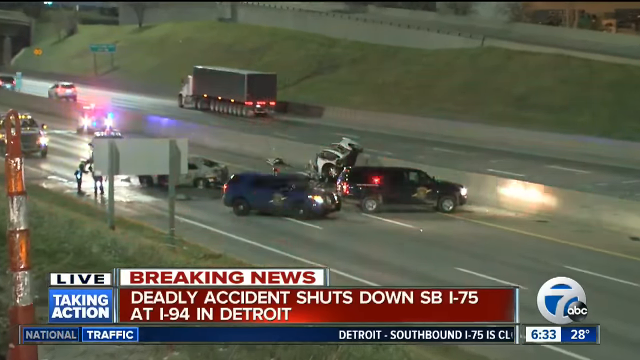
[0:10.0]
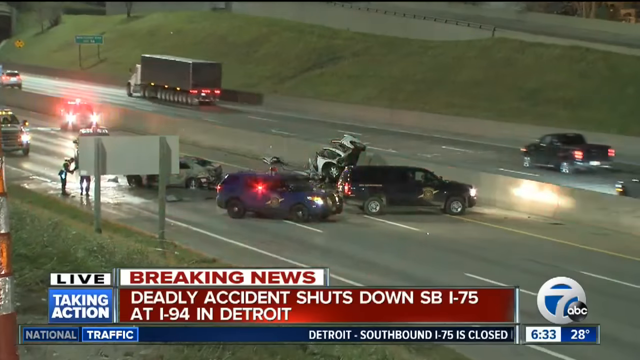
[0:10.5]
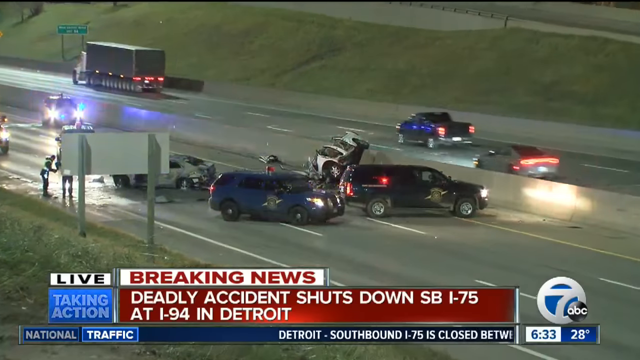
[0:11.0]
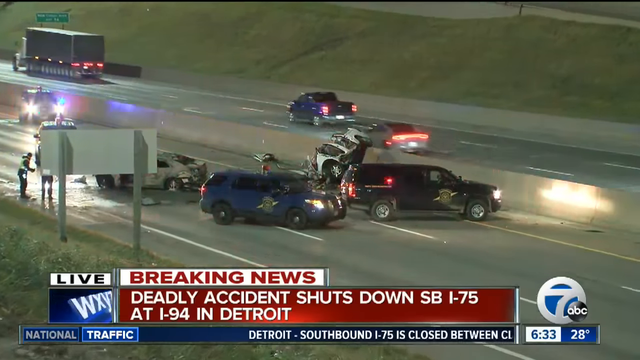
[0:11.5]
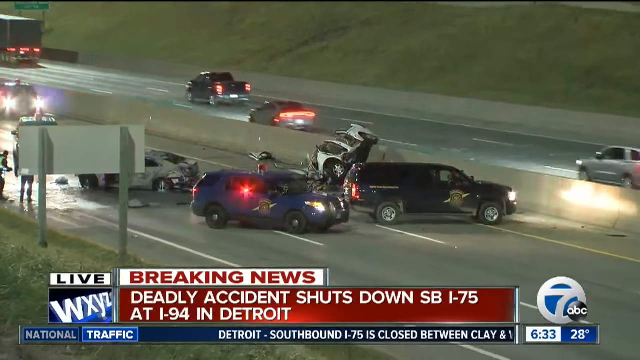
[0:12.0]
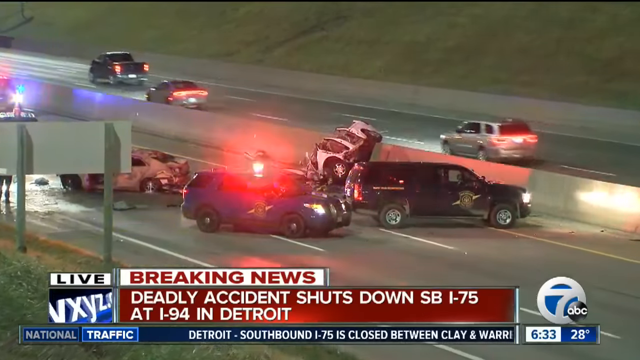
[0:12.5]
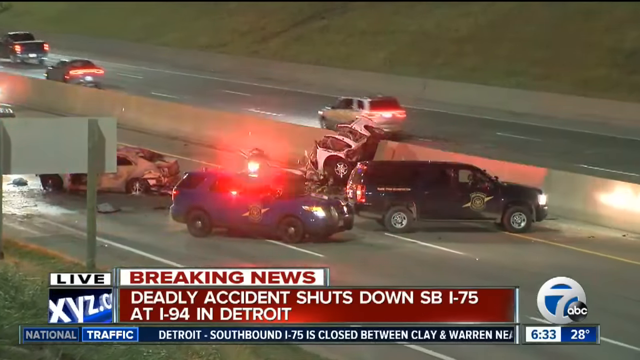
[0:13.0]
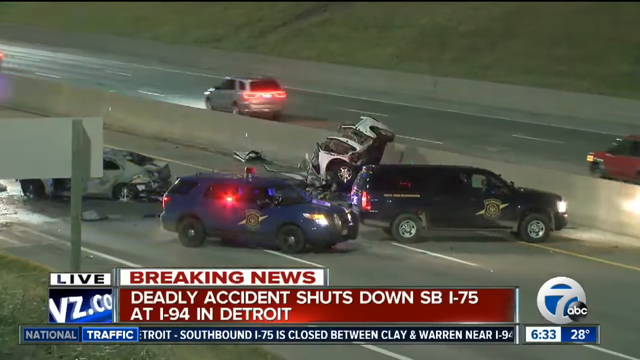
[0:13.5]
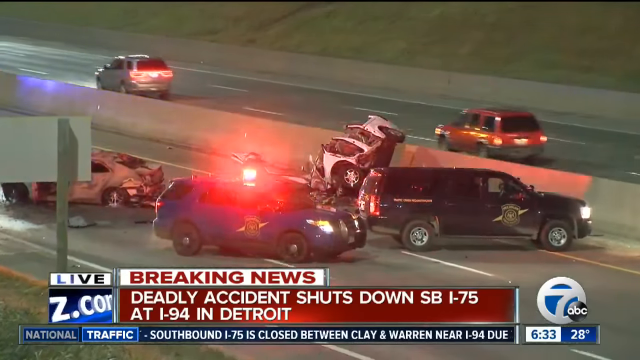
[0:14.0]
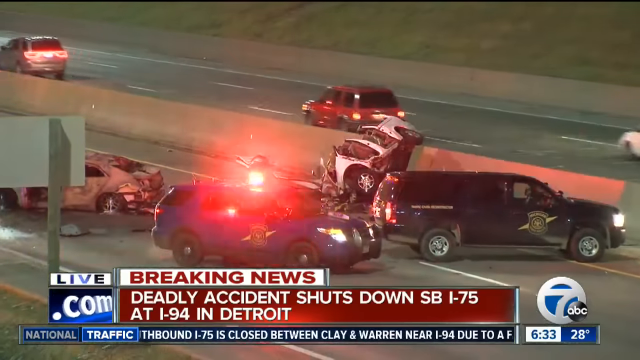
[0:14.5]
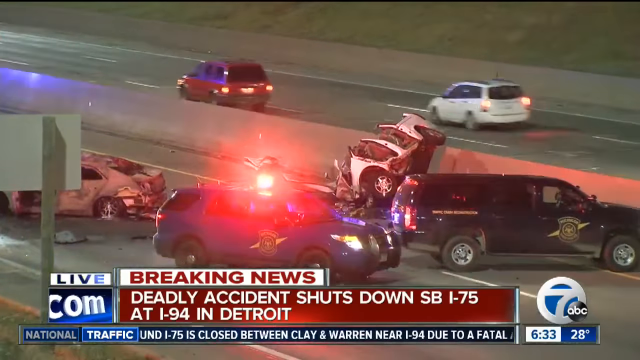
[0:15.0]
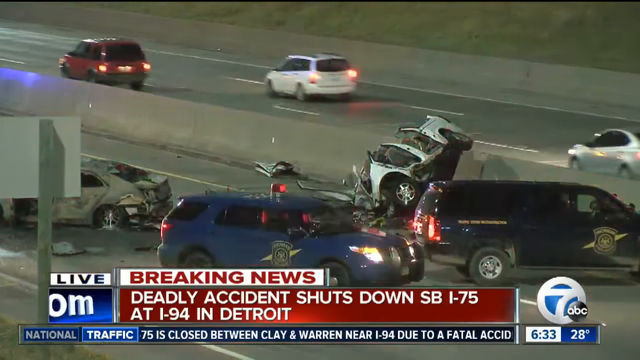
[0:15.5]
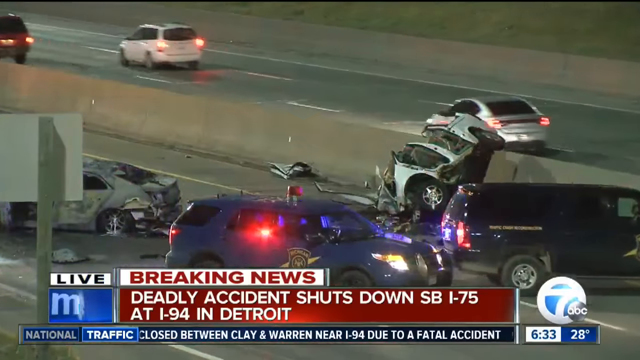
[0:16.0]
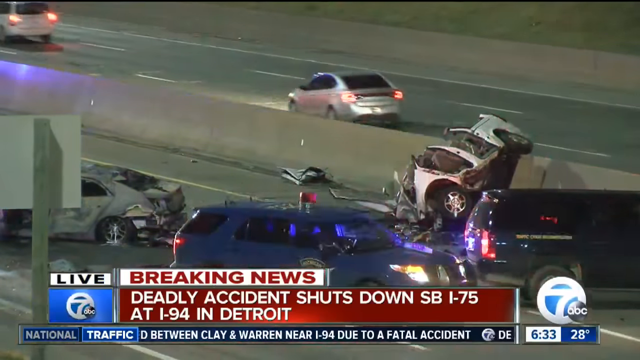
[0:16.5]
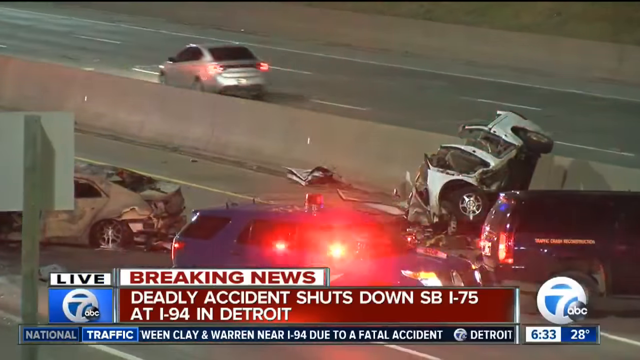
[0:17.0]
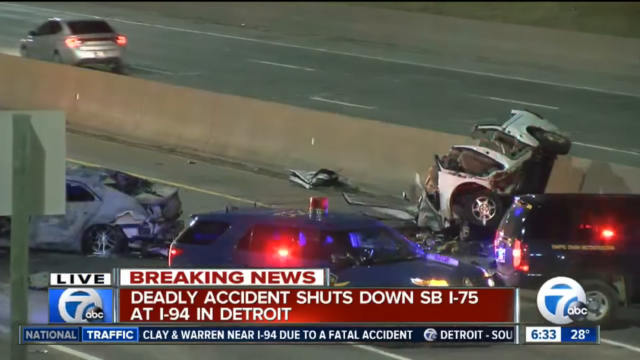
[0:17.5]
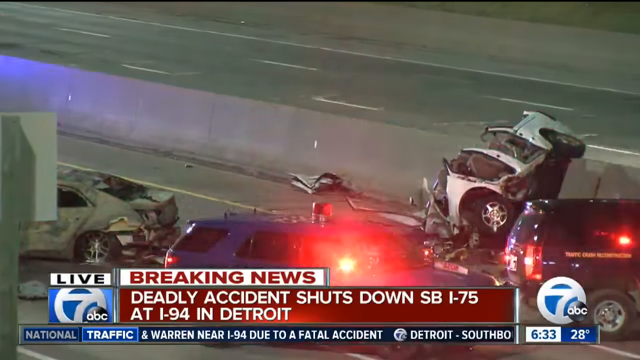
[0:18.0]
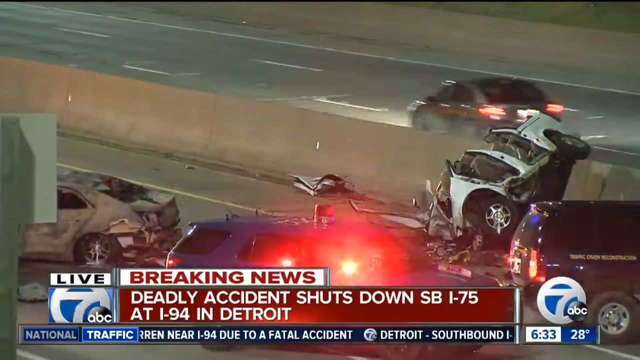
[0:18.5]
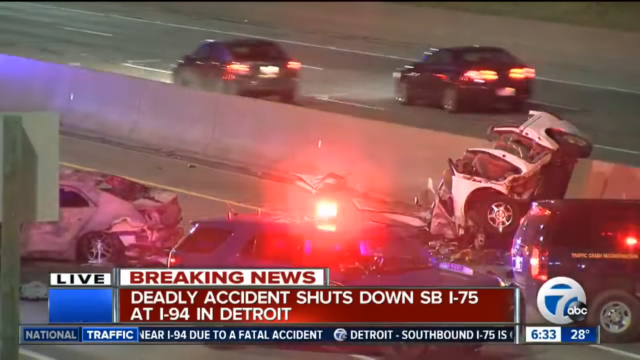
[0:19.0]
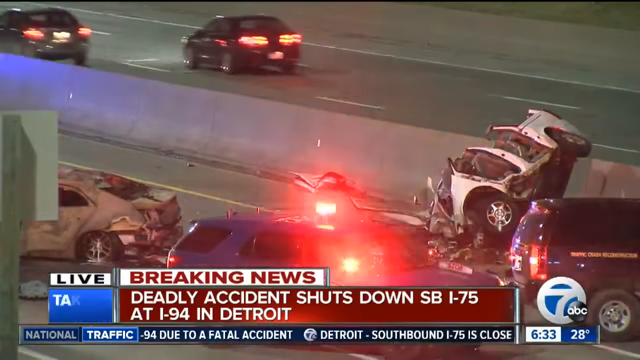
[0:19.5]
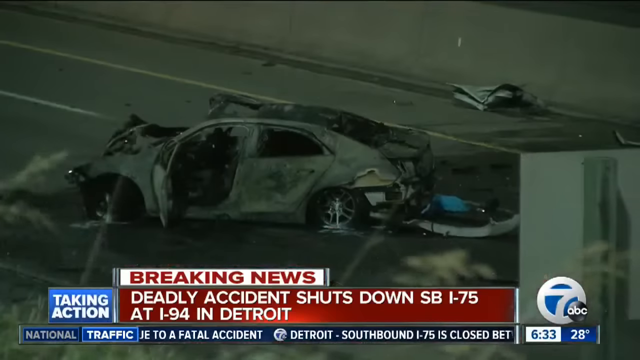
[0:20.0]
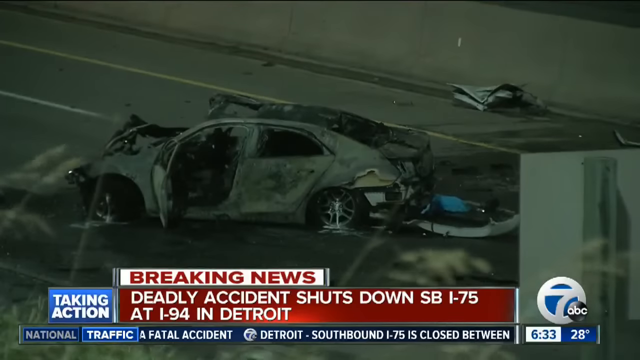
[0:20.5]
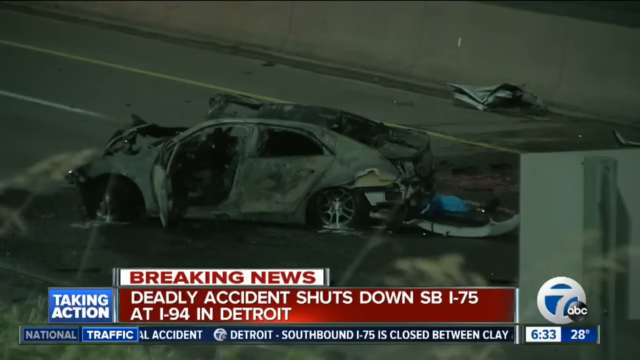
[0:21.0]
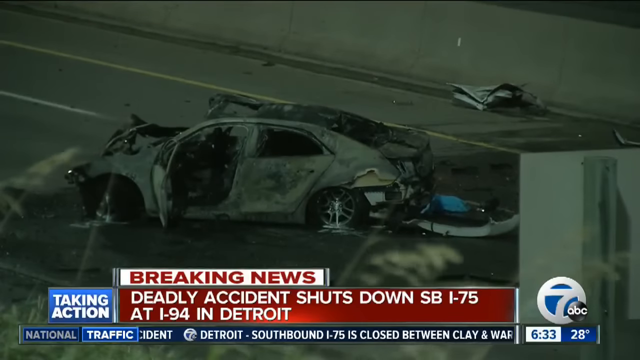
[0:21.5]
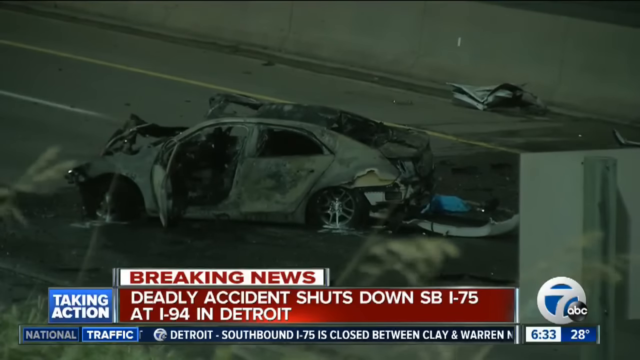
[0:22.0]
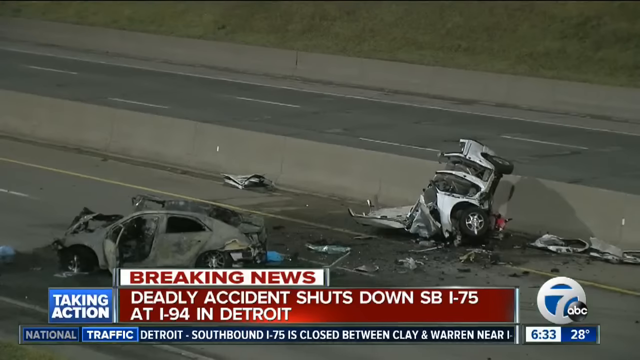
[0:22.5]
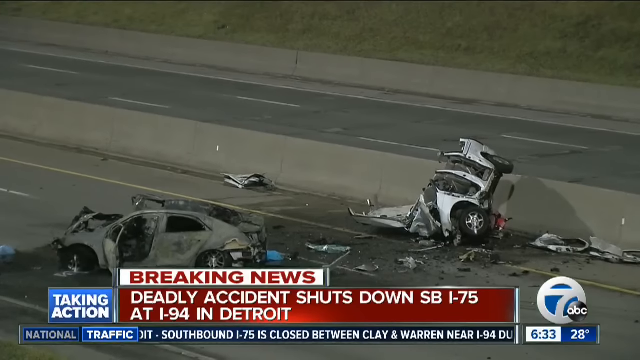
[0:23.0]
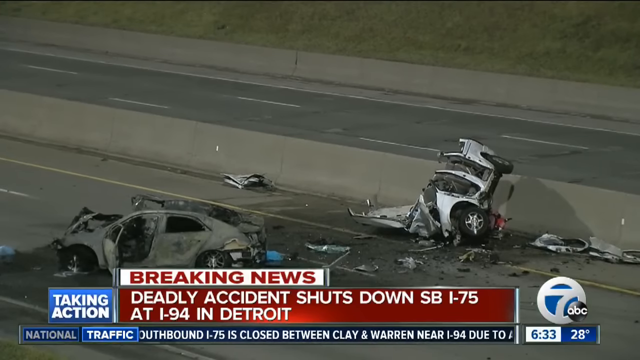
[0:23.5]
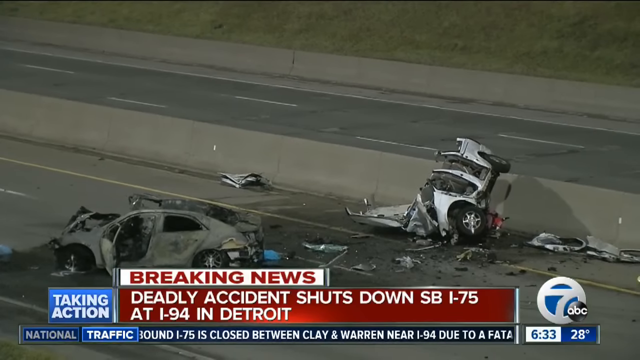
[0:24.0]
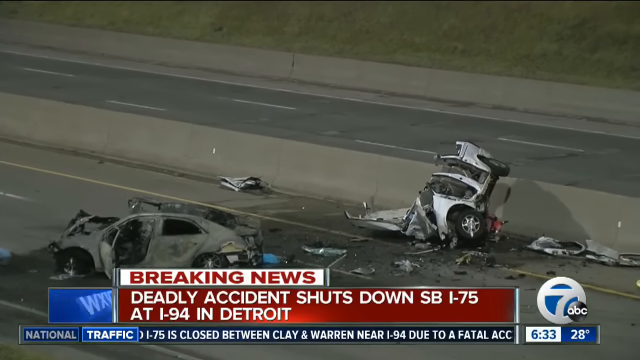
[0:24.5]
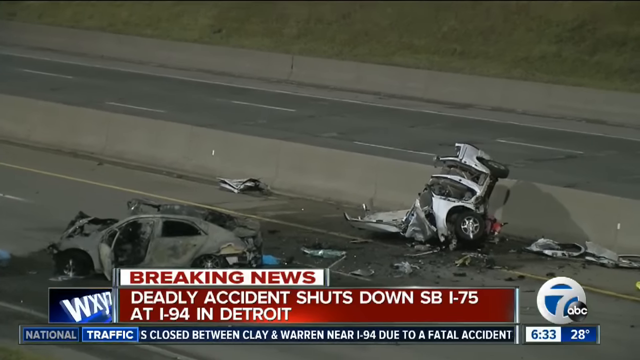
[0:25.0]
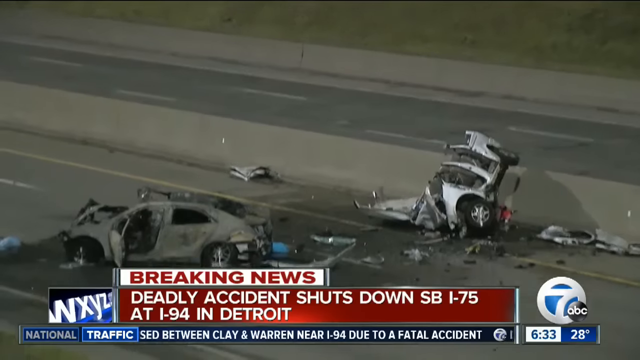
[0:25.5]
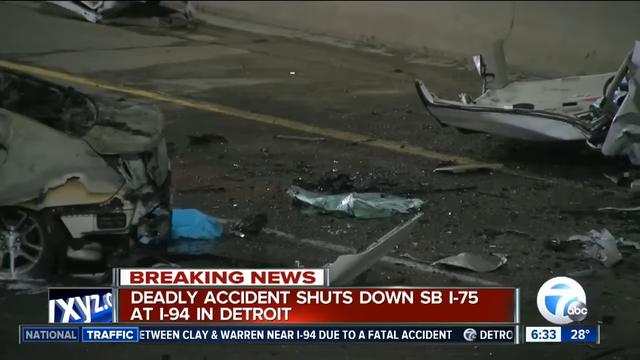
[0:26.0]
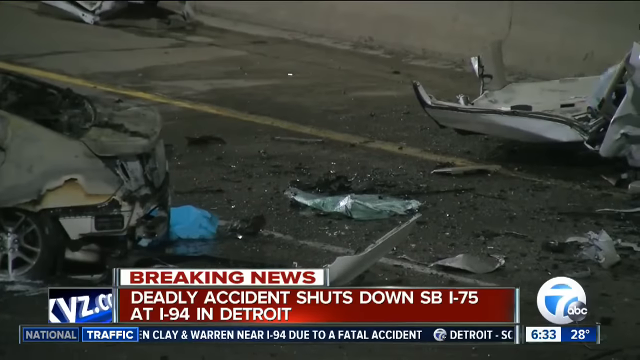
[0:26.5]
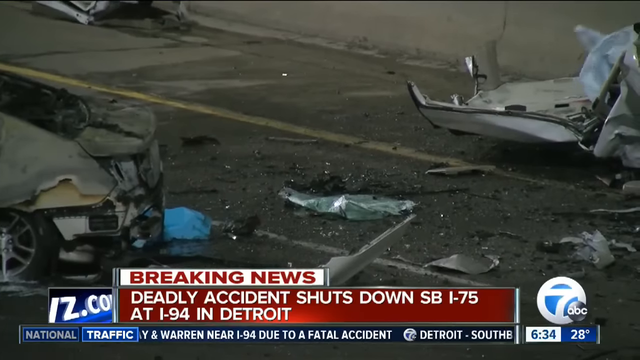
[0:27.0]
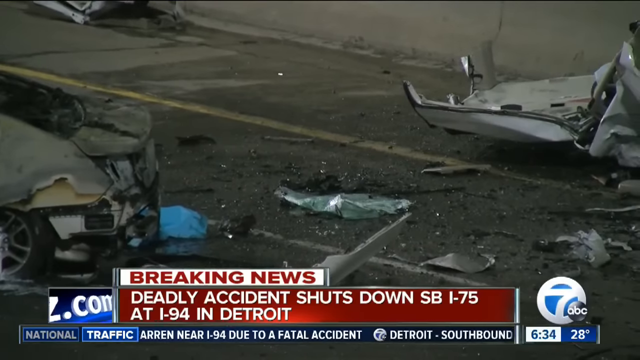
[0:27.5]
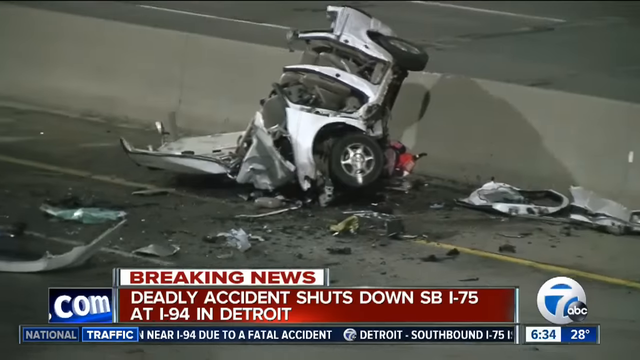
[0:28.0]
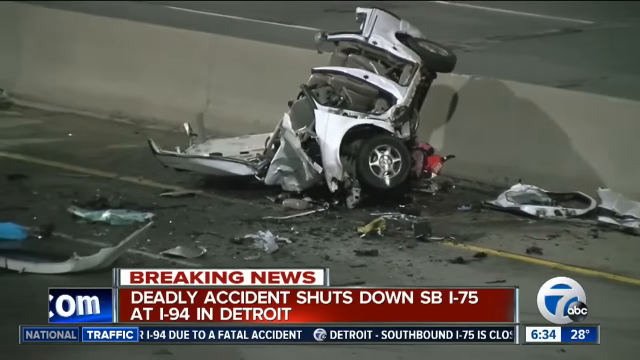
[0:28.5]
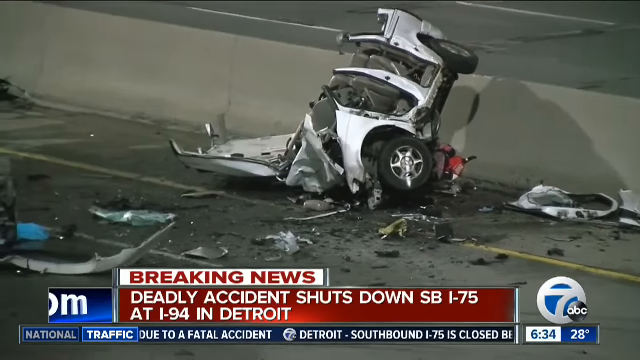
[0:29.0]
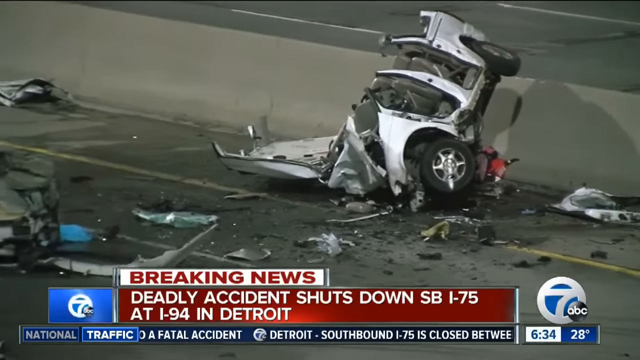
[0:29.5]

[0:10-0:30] Kim continues reporting on the crash. Two cars are shown badly damaged, and another one is completely wrecked, broken down into smaller pieces.